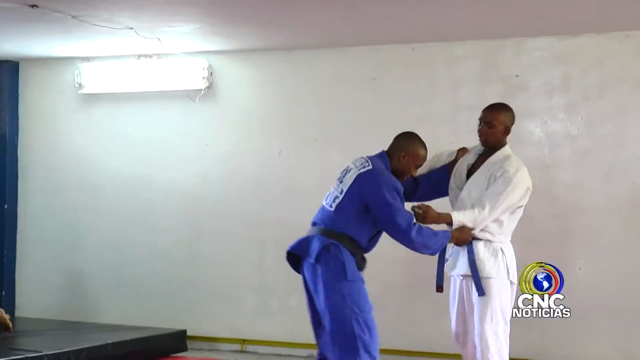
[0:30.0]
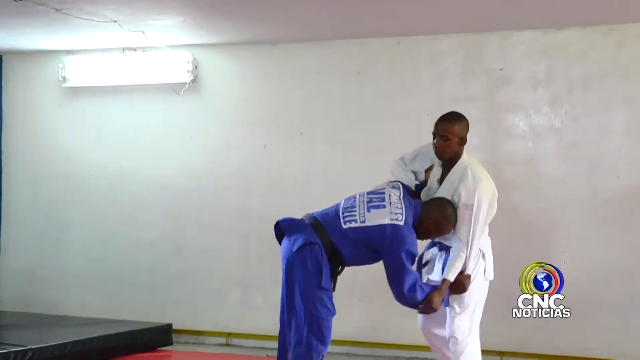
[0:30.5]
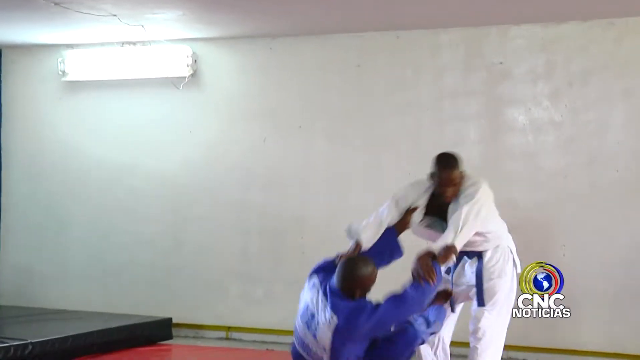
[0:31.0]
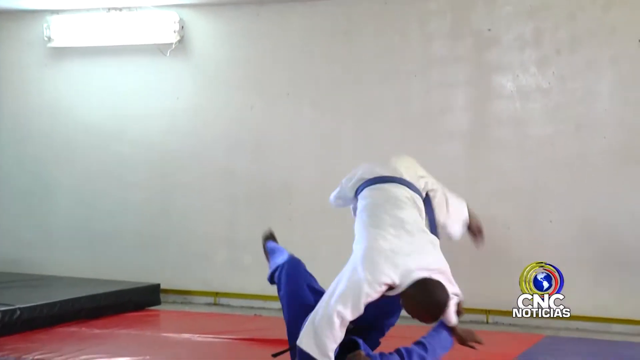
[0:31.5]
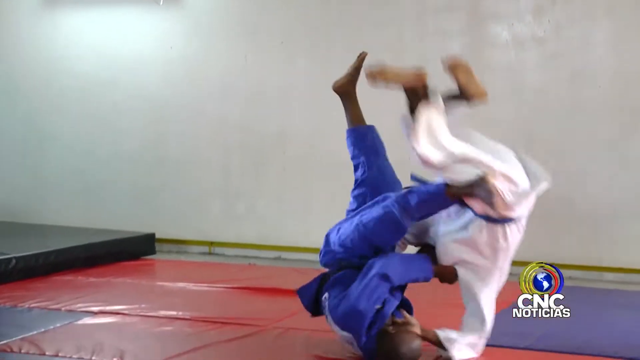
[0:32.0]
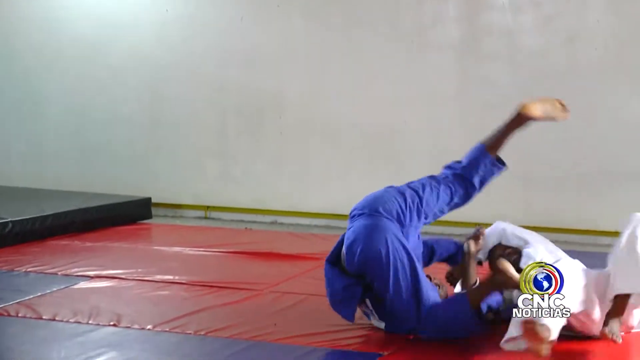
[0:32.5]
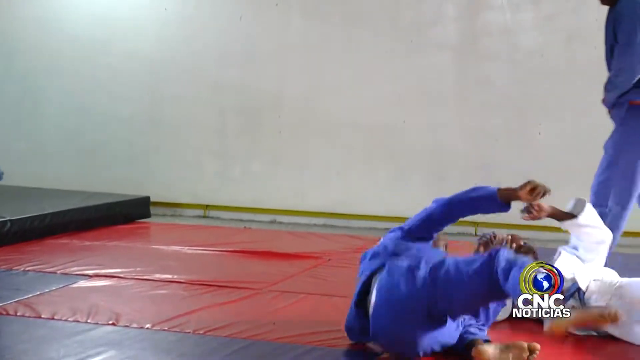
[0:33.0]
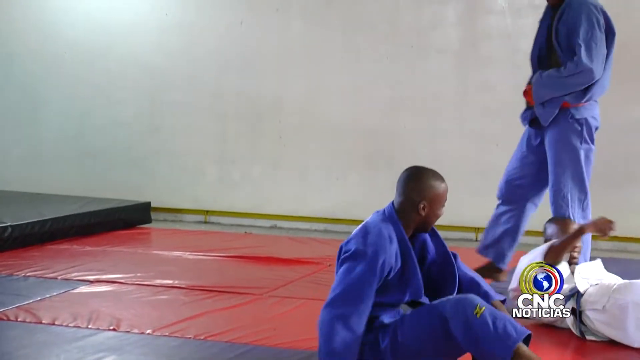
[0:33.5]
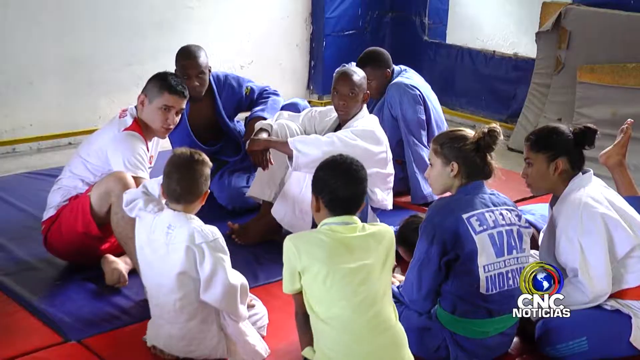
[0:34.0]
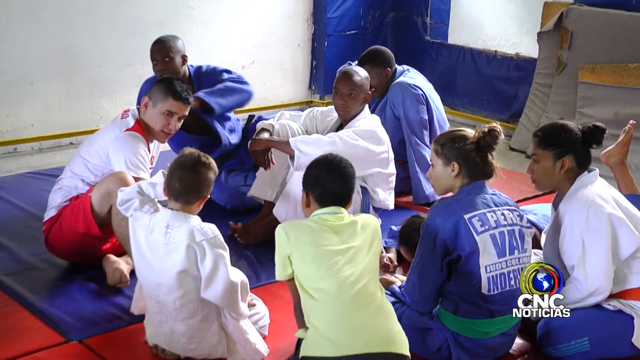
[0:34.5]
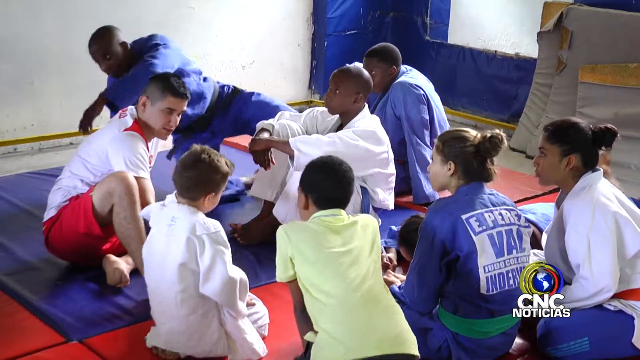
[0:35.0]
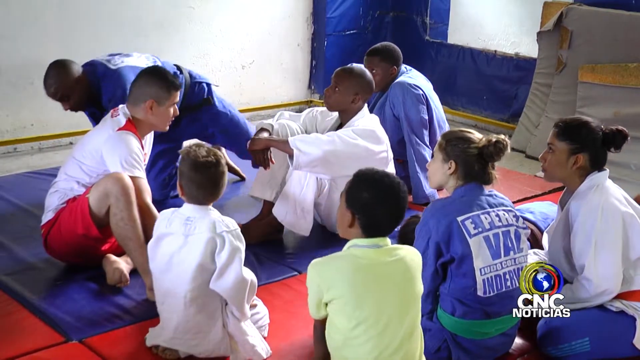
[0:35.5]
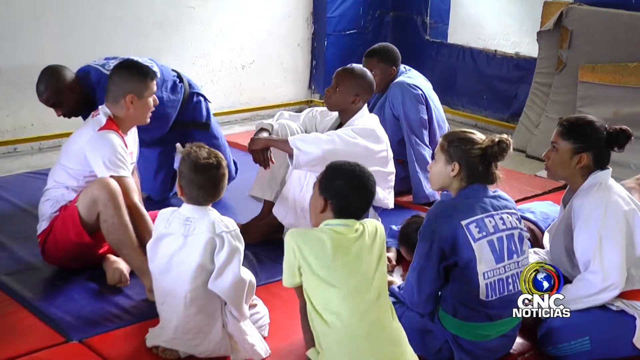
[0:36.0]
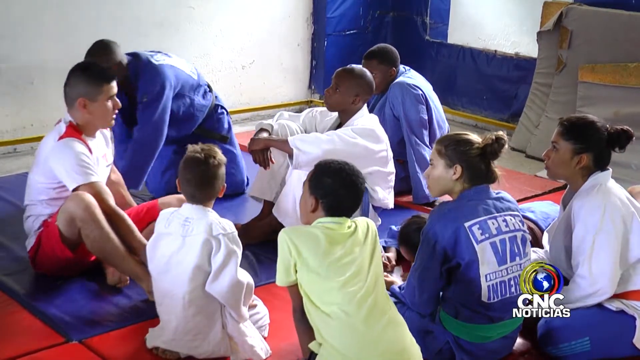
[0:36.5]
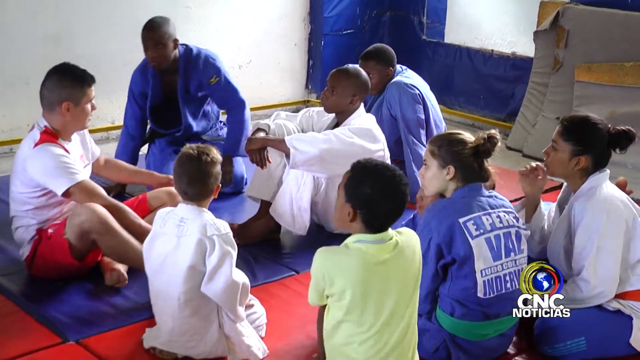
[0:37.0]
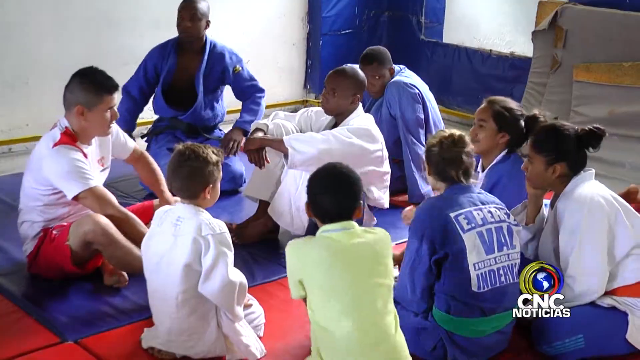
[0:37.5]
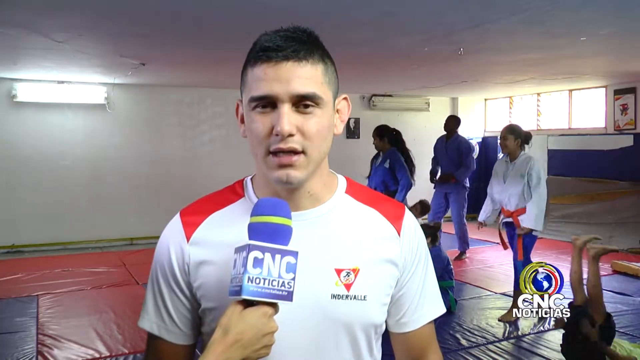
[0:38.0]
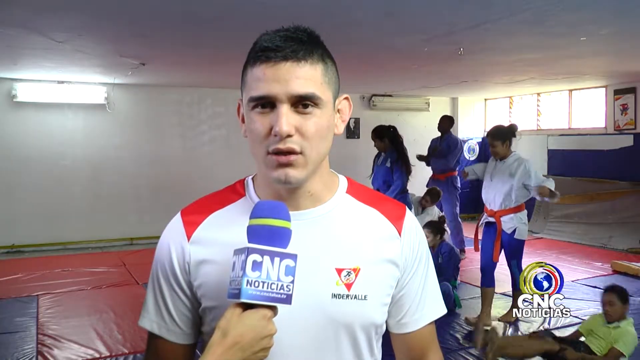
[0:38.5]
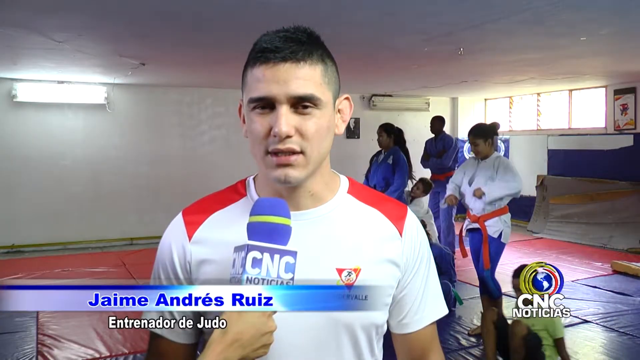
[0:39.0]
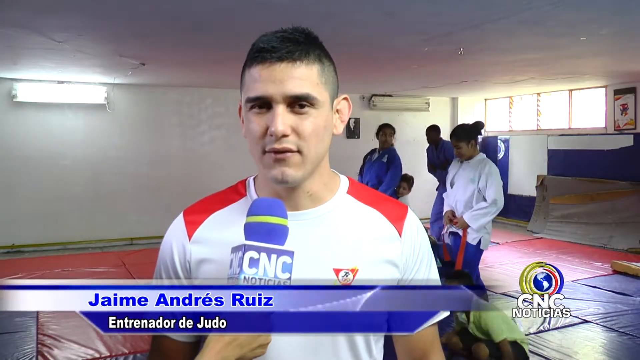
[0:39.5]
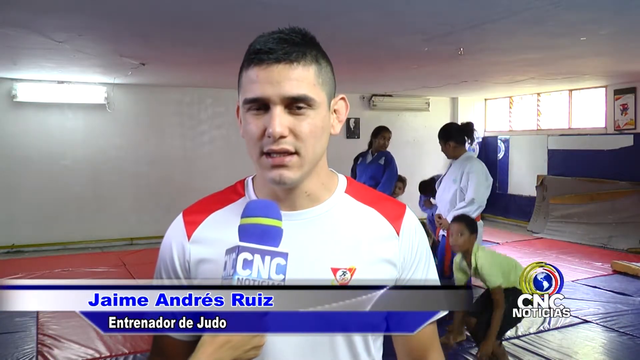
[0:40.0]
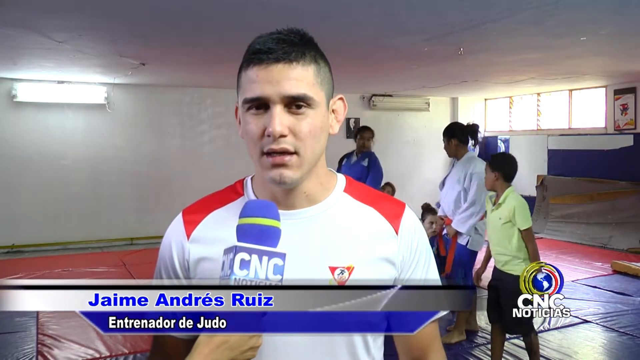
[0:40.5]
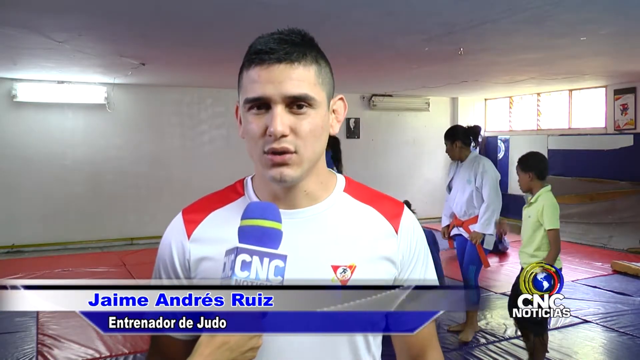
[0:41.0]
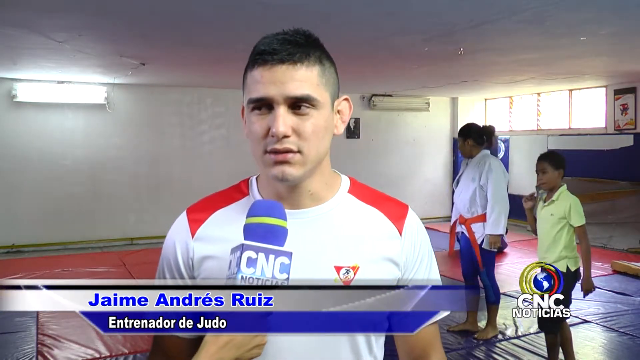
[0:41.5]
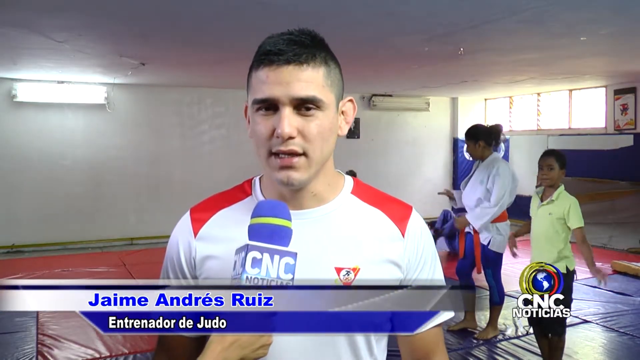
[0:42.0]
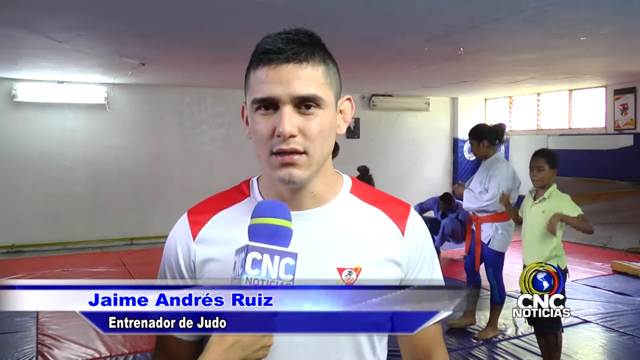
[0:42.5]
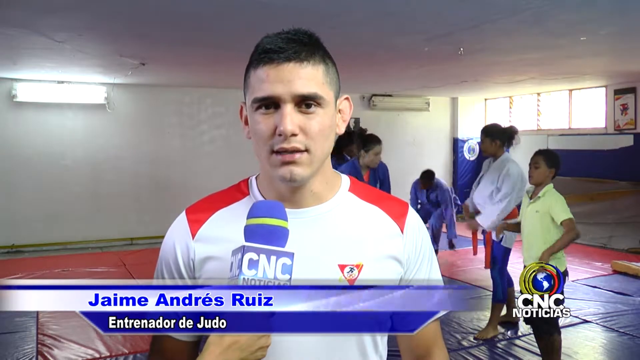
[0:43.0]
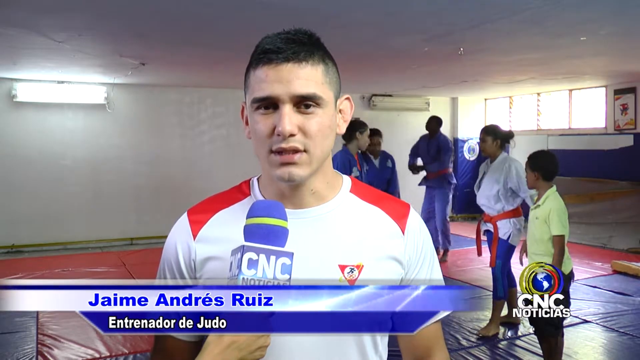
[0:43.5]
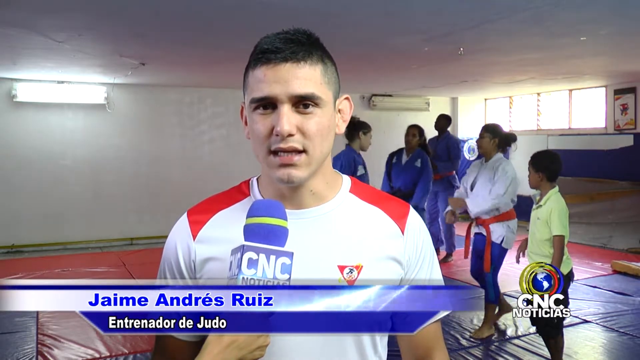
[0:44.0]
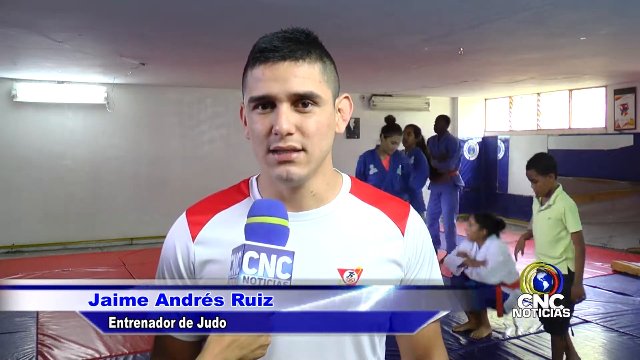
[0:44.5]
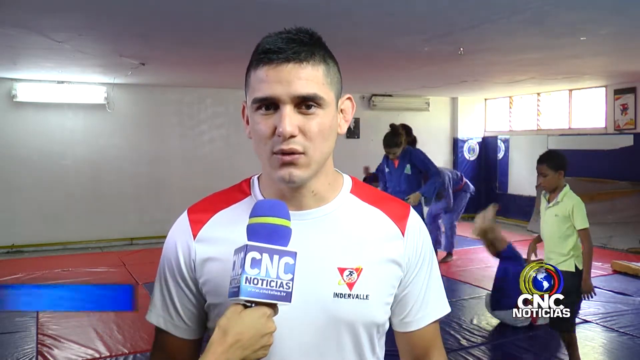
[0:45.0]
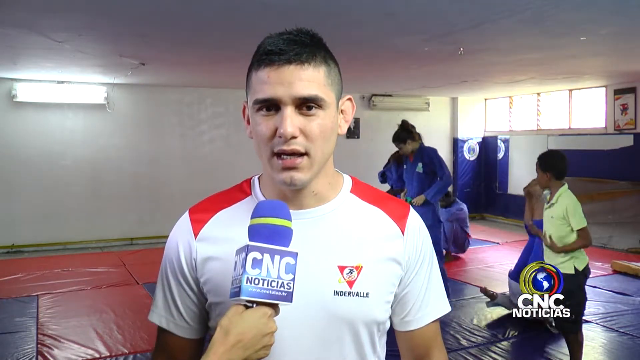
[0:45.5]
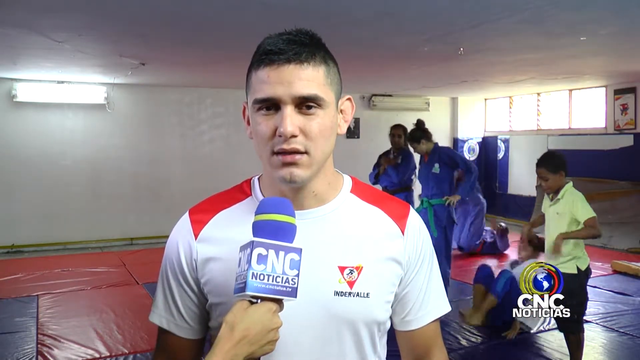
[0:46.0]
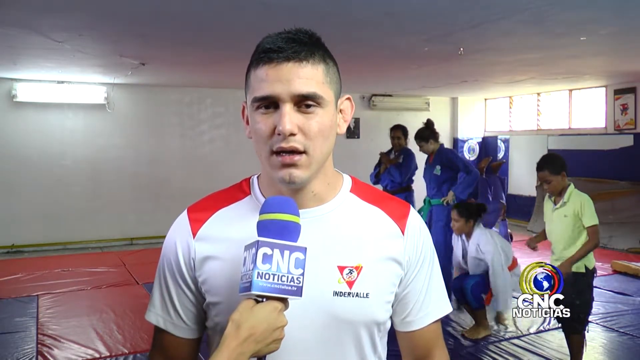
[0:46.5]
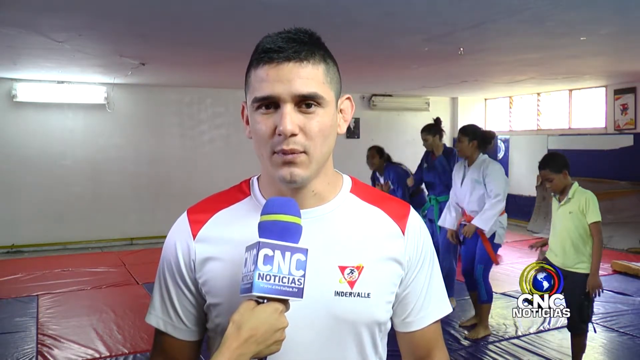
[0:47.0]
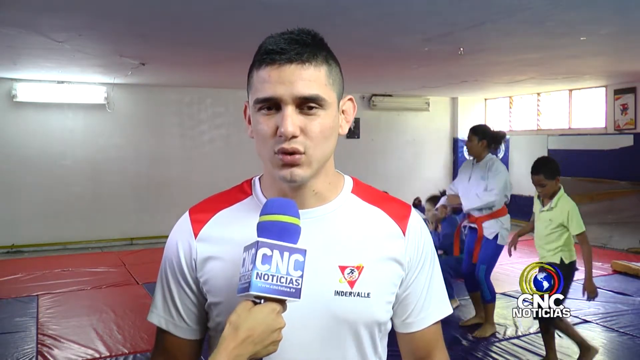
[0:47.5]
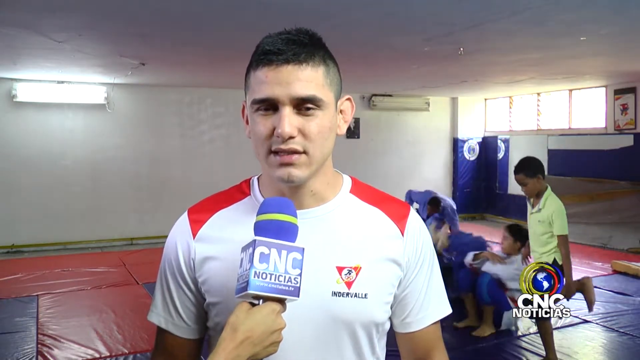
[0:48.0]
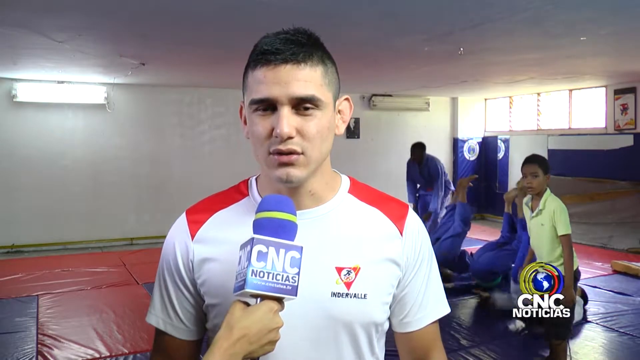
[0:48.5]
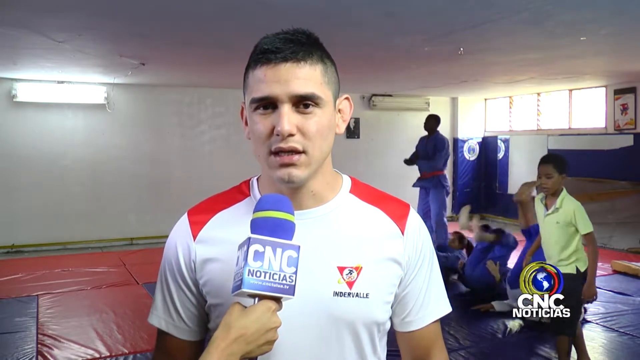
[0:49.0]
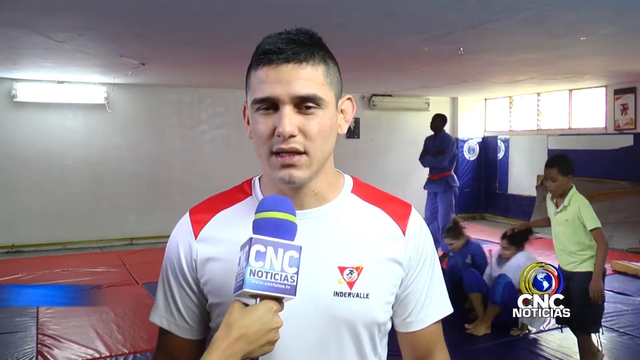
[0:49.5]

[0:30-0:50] In a new scene in the gym, with a white wall and a light shining at the very top near the ceiling, two Black men are training. One, in a blue martial arts outfit with a black belt, is on the left, almost kneeling, and has grabbed the other man by his shoulder and right hand; the other wears a white outfit with a blue belt. They do some sort of pirouette: the man in blue, at the bottom, drags down the man in white, pushes him up with his feet, and they spin on the floor, with the man in blue landing on top of the man in white. Both smile as they go to stand up. In a new scene, nine people sit on the floor in different outfits, some blue, some white, some in other shirts, and of different backgrounds, white, Black and brown. Sitting almost in a circle, they listen carefully to a man on the left in red shorts with a fresh haircut, apparently a teacher. He then gives an interview, looking straight at the camera, wearing a mainly white shirt with some red stripes, while someone holds a microphone right underneath his face. A banner shows his name, "Jamie Andre Ruiz". Behind him, students exercise, doing some kind of workout and stretching.